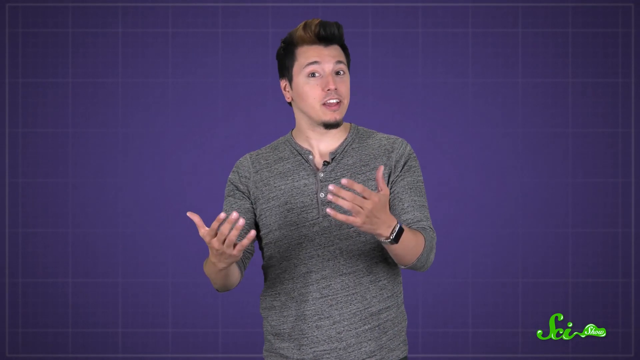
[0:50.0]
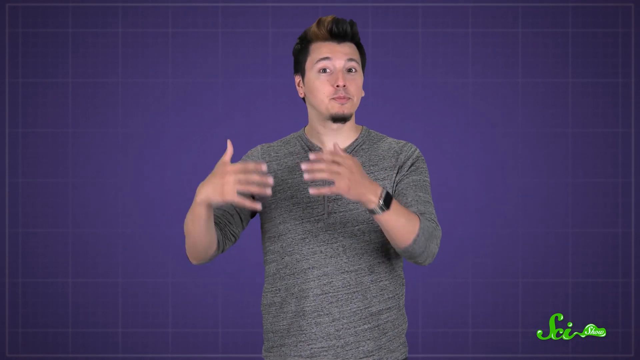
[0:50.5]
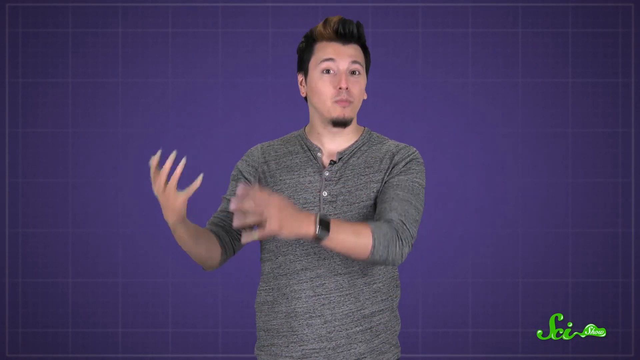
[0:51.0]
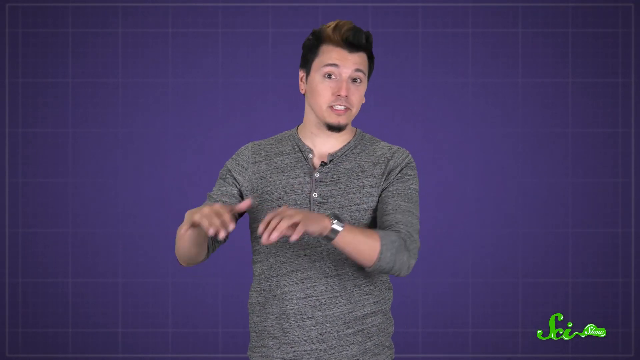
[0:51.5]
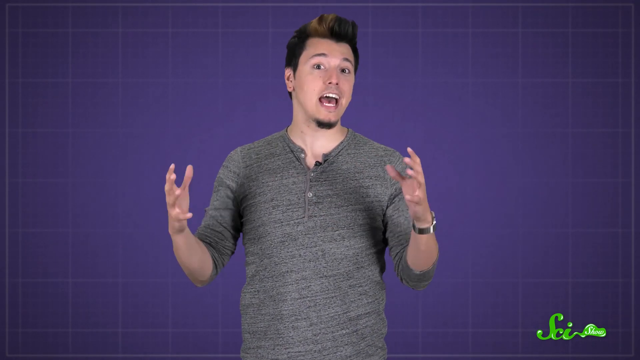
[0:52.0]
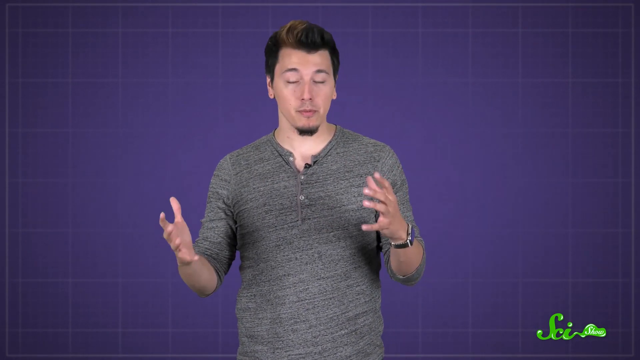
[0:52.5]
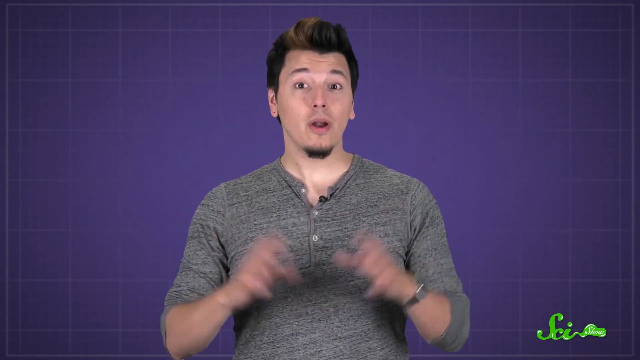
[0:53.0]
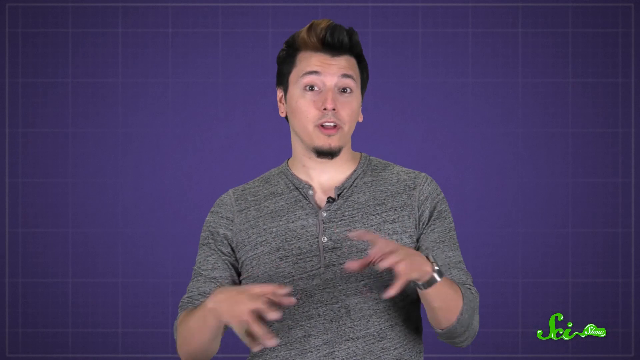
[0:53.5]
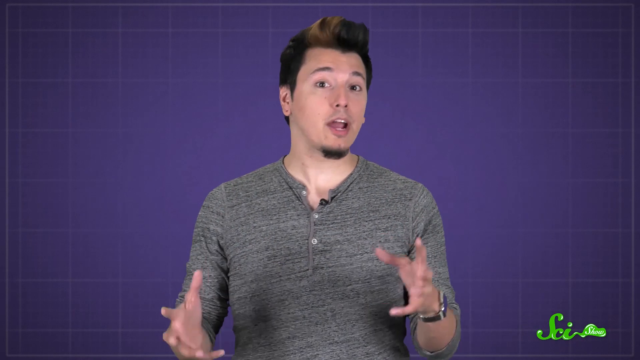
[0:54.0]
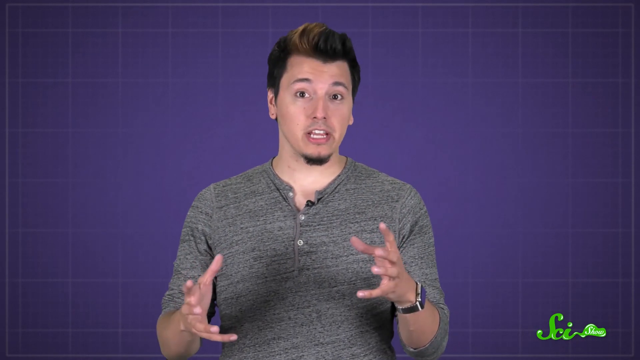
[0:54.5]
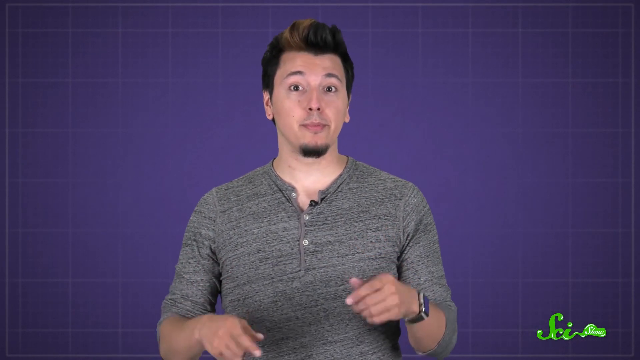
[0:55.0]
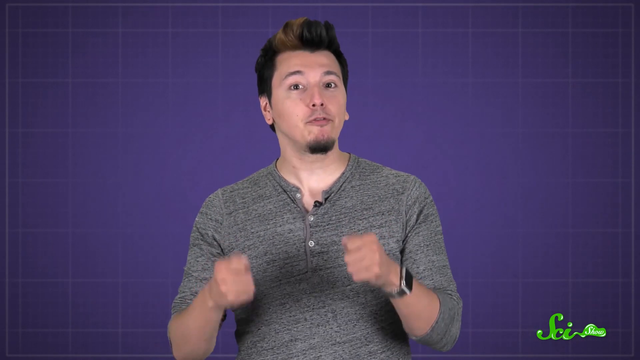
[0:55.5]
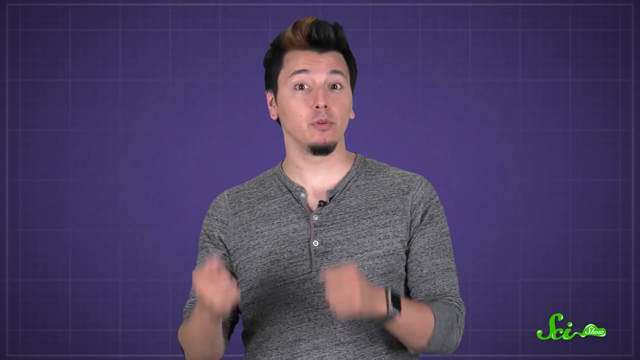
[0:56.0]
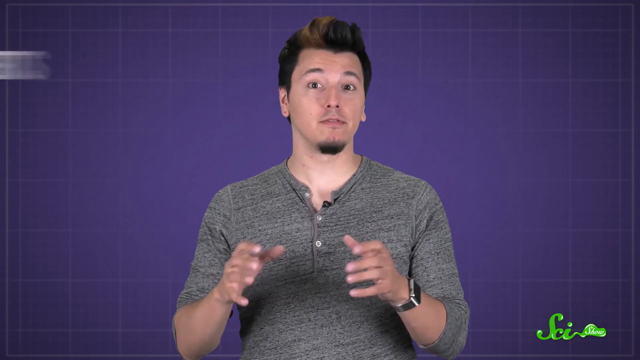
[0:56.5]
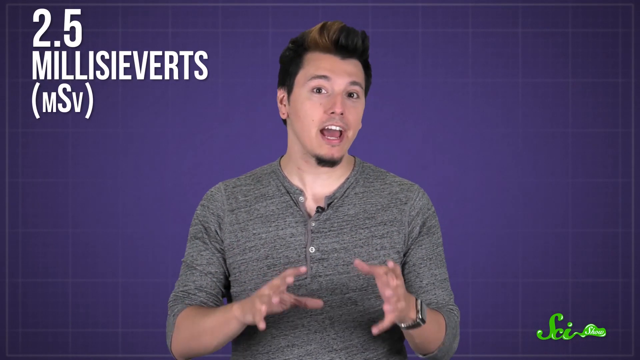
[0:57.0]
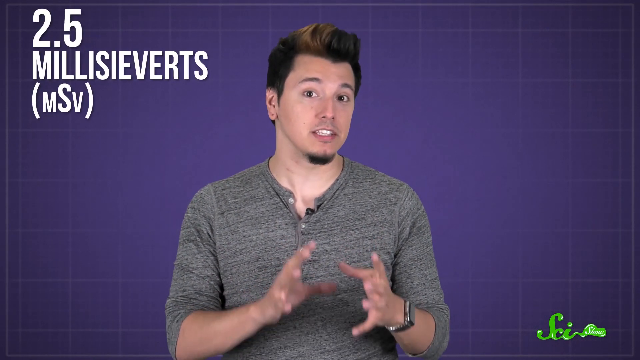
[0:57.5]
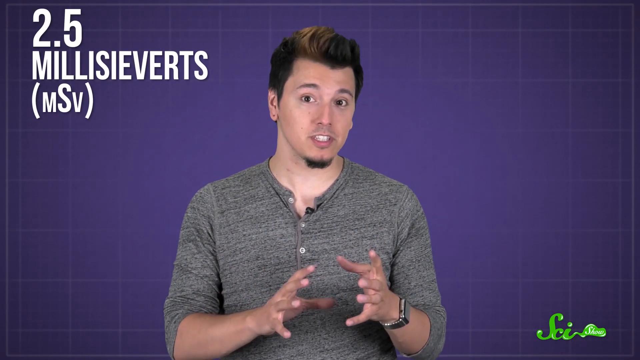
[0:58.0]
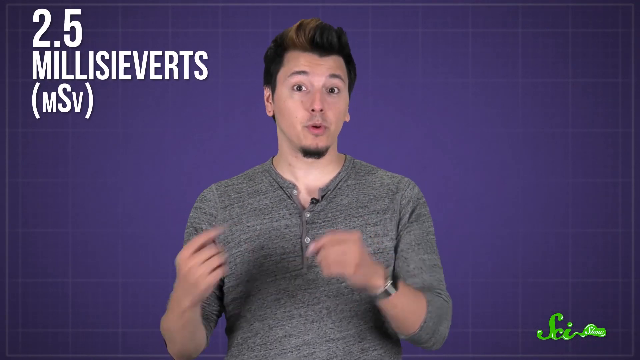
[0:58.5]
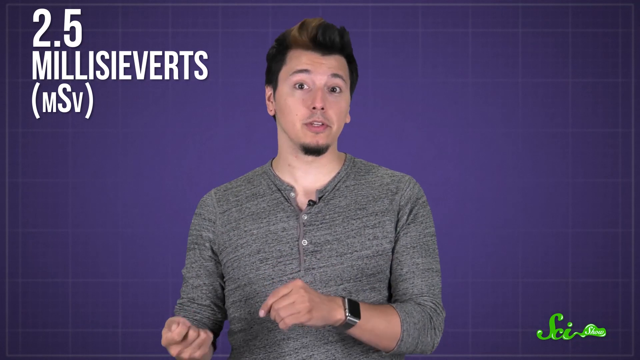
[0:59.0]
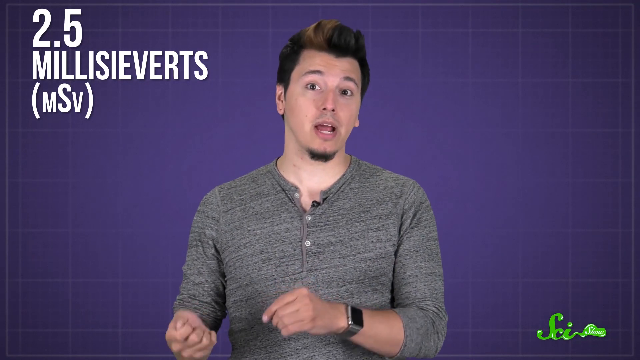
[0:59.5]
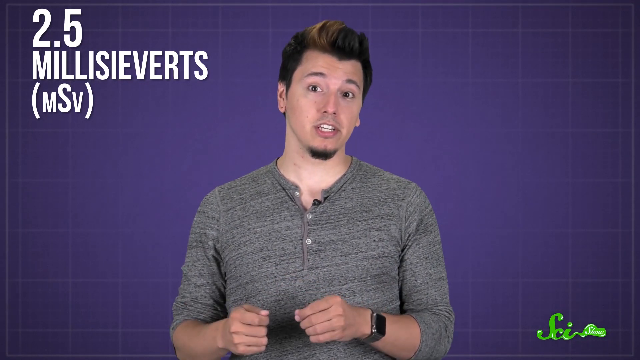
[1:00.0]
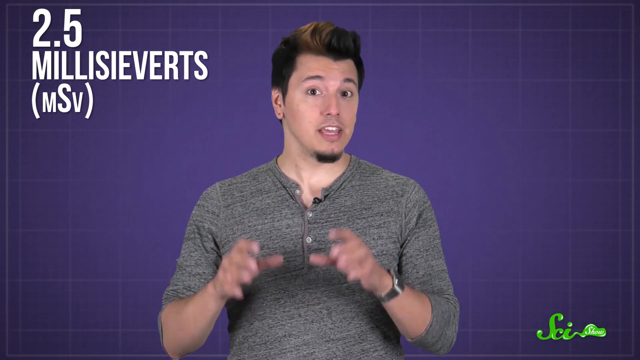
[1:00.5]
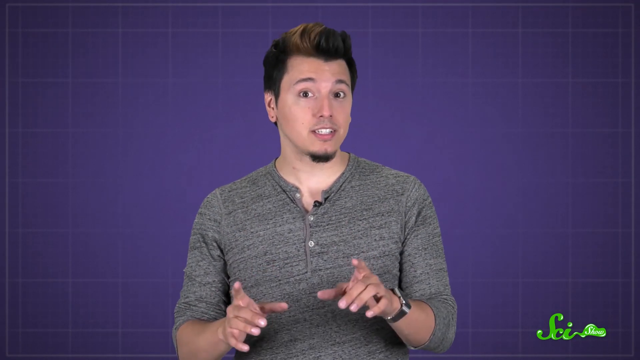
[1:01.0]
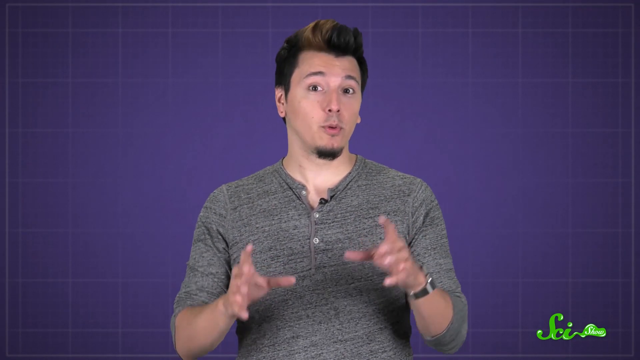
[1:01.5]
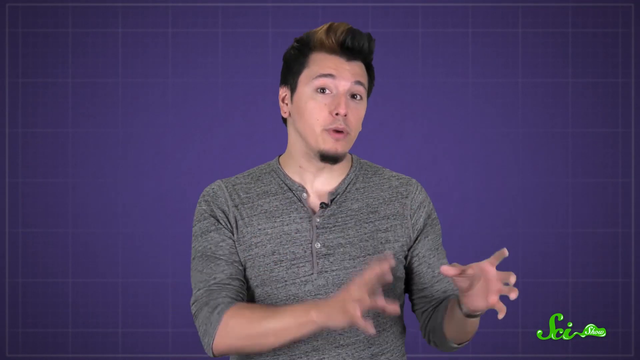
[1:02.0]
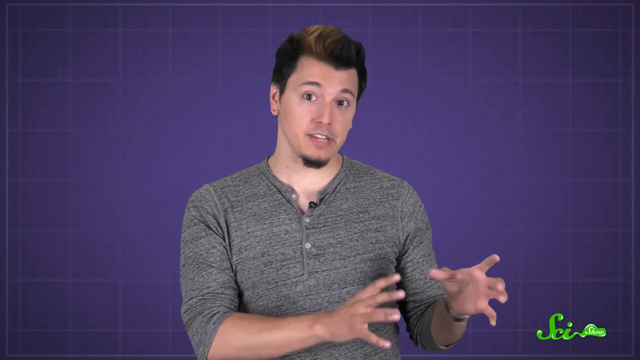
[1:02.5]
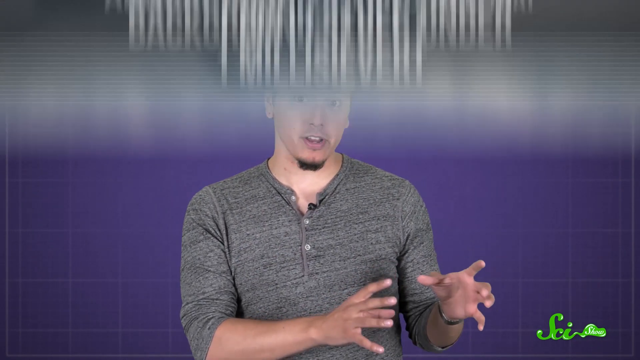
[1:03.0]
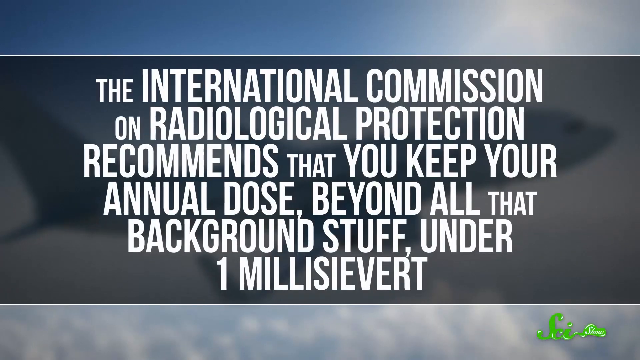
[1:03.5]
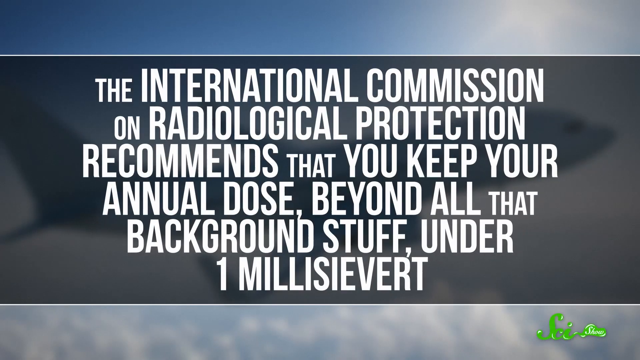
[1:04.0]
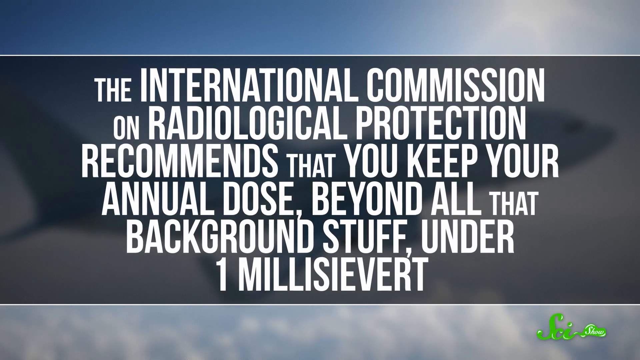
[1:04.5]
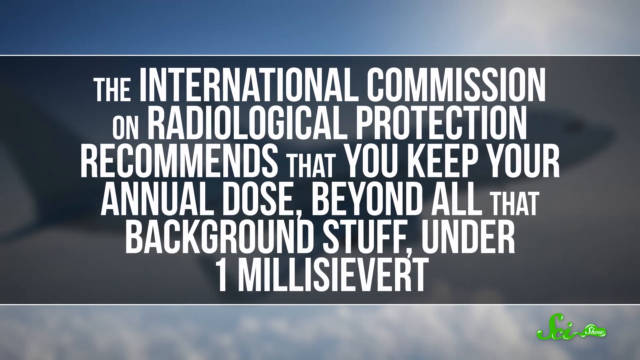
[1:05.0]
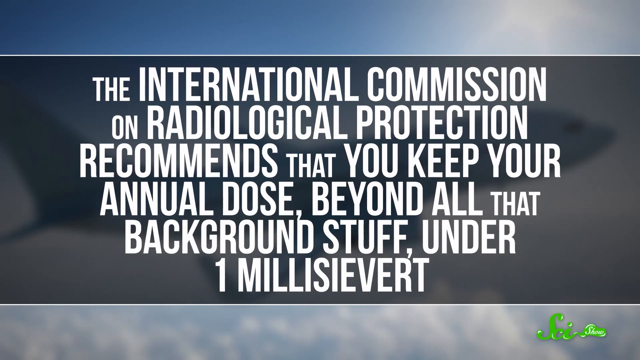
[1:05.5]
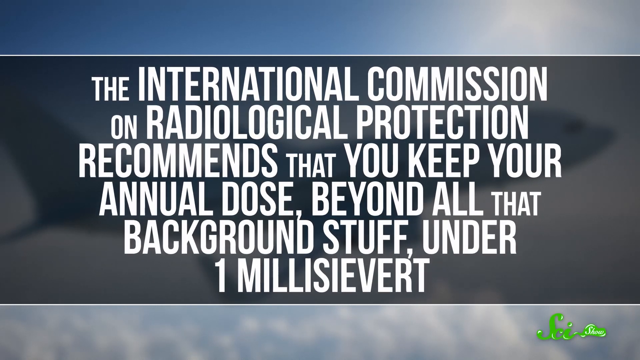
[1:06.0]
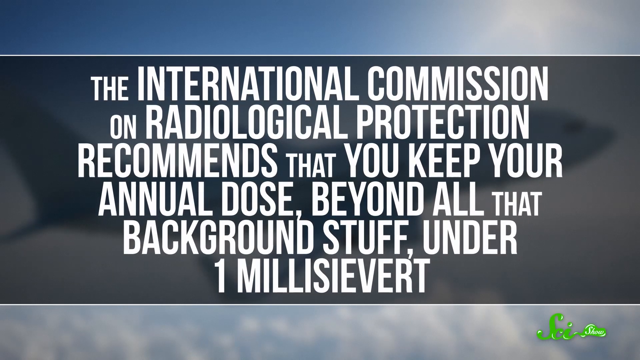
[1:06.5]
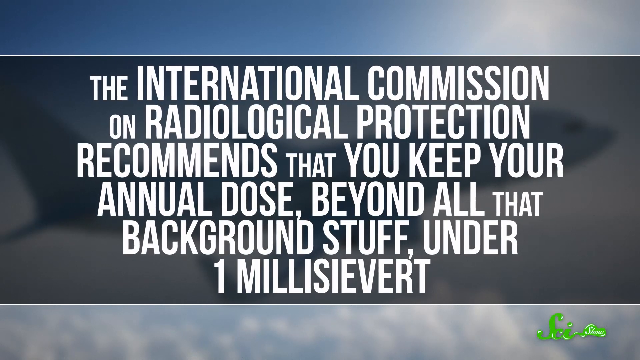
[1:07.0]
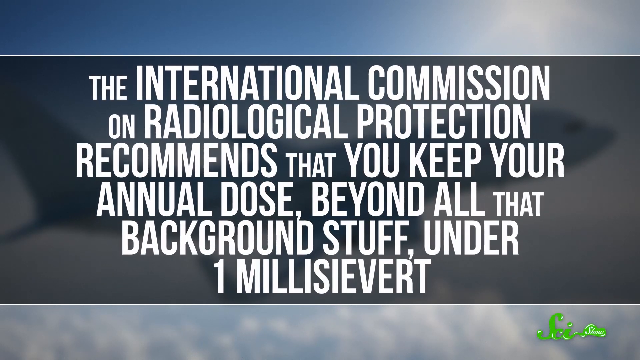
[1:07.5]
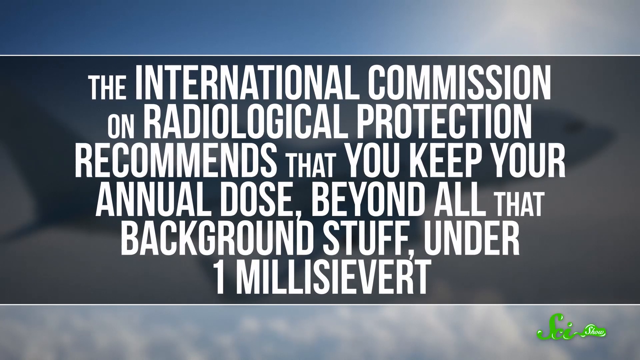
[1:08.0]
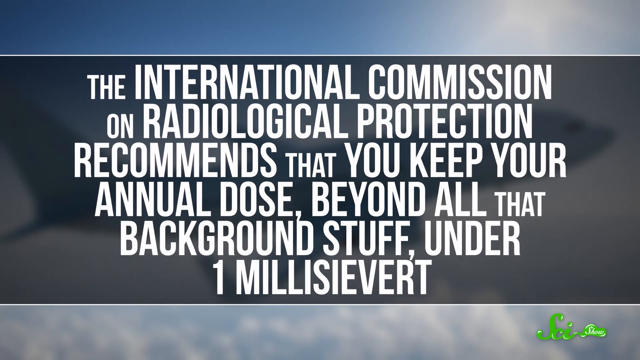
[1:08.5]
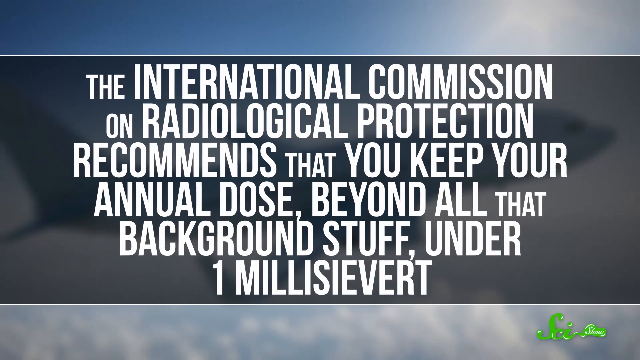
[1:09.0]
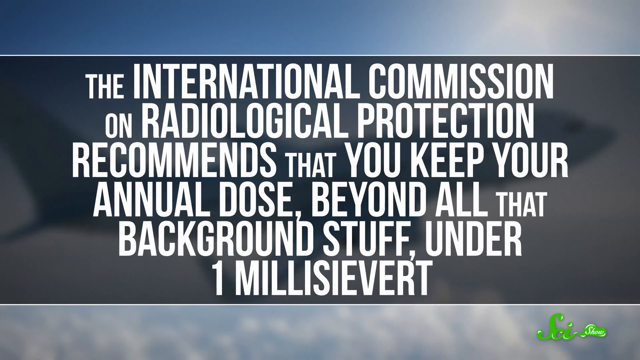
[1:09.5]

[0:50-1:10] The narrator is in the center of the screen, speaking while looking directly into the camera, his head sometimes tilting to the left or right. What appears to be a small black microphone is clipped to the lapel of his gray shirt. His hands are in front of him, palms open and sometimes facing inward, at times appearing as if he is holding something in the air in front of him. Up in the corner of the screen to his right, large white text reads "2.5 millisieverts (mSv)"; after a few moments it moves out of view to the right of the narrator. A new screen then appears with a bluish-white background and a central text bar with a gray background. There are some shapes in the back that are hard to make out. Superimposed in the text bar in large white letters is the statement: "The International Commission on Radiological Protection recommends that you keep your annual dose, beyond all that background stuff, under 1 millisievert". The statement remains for a few moments before the video transitions back to the narrator.